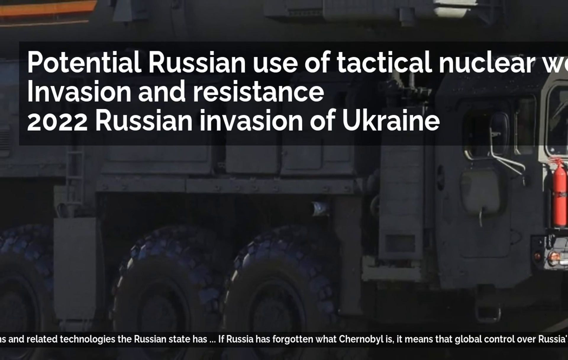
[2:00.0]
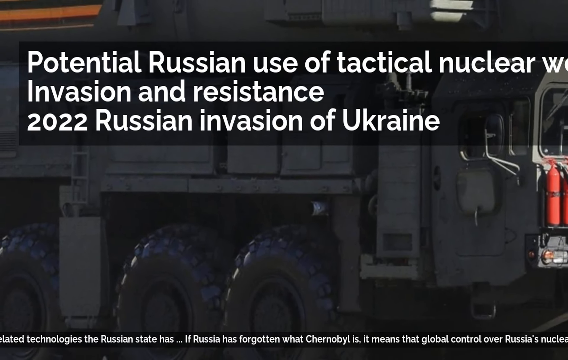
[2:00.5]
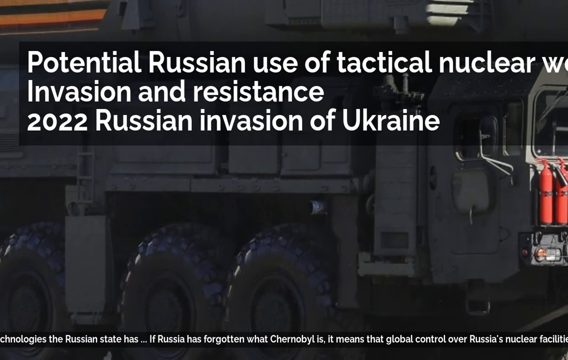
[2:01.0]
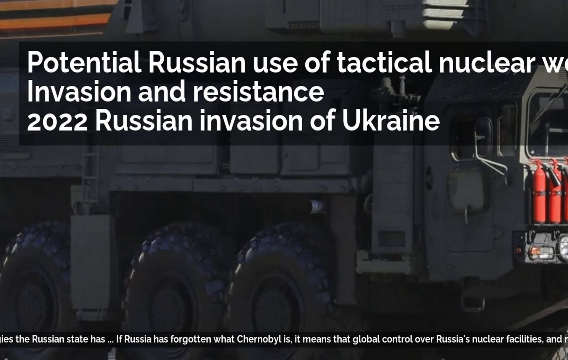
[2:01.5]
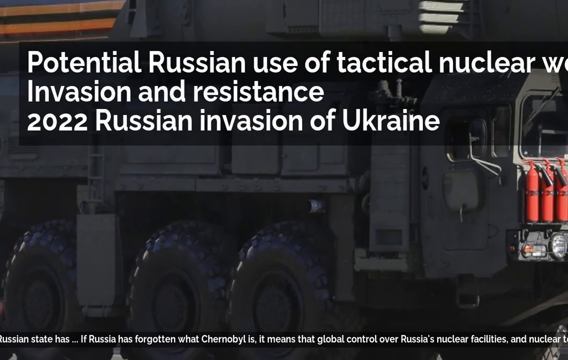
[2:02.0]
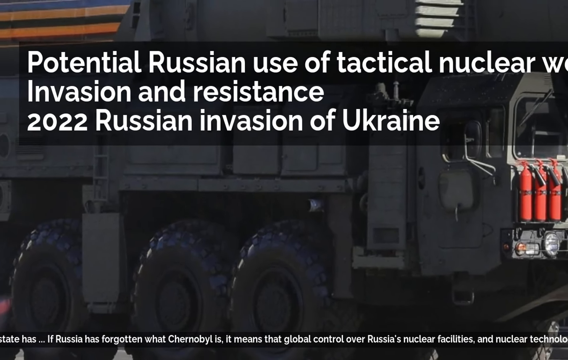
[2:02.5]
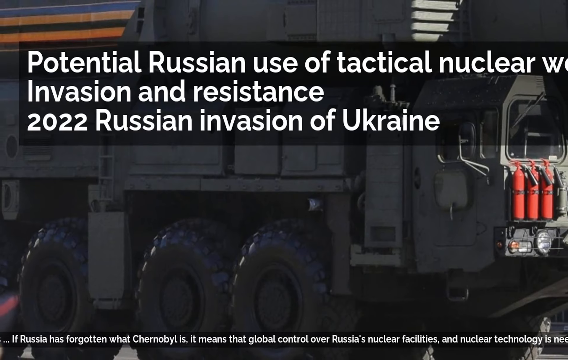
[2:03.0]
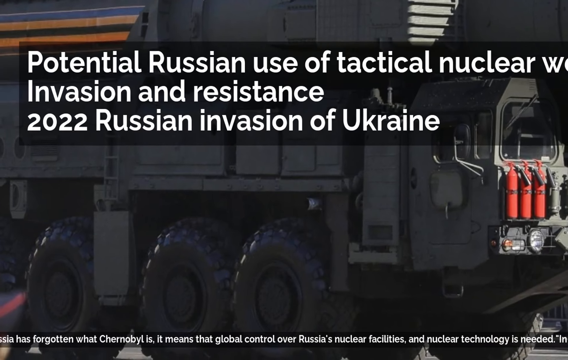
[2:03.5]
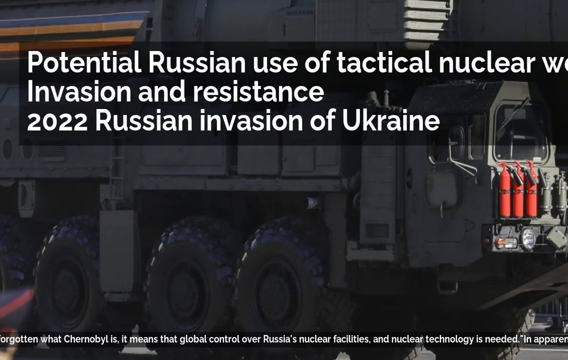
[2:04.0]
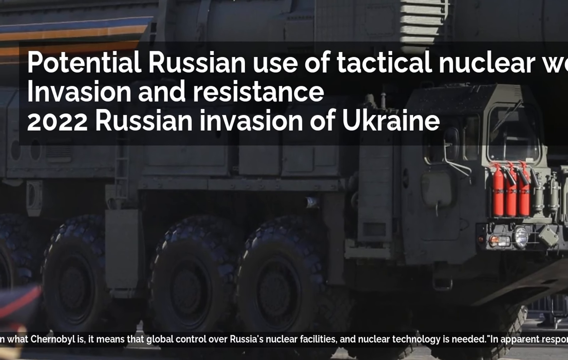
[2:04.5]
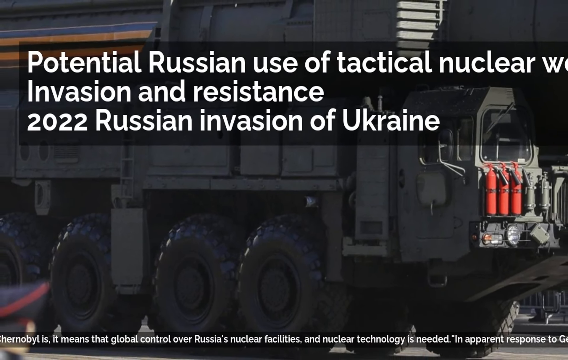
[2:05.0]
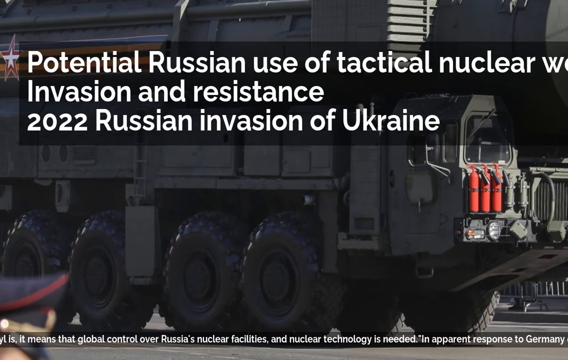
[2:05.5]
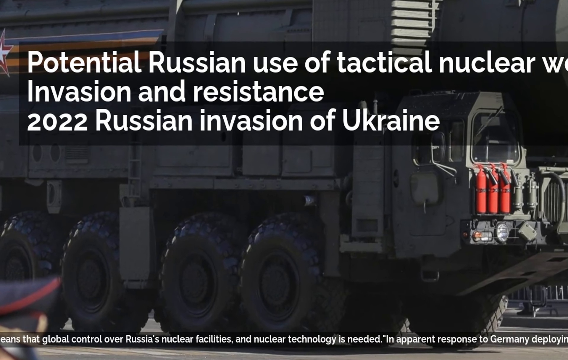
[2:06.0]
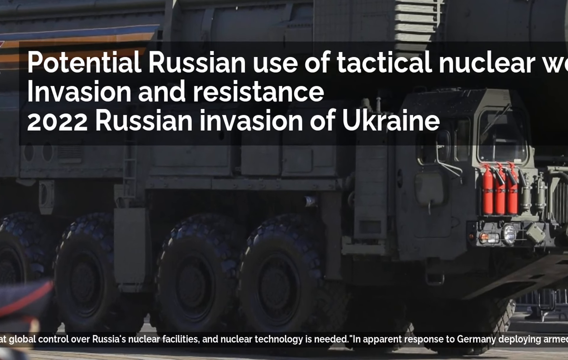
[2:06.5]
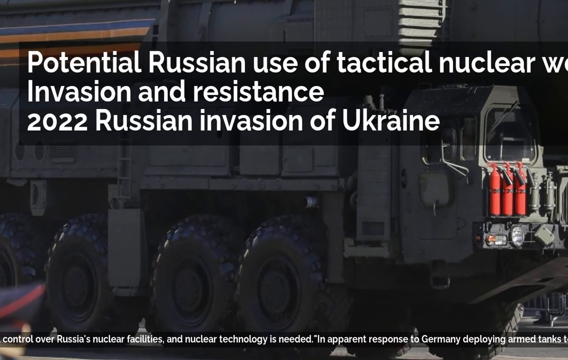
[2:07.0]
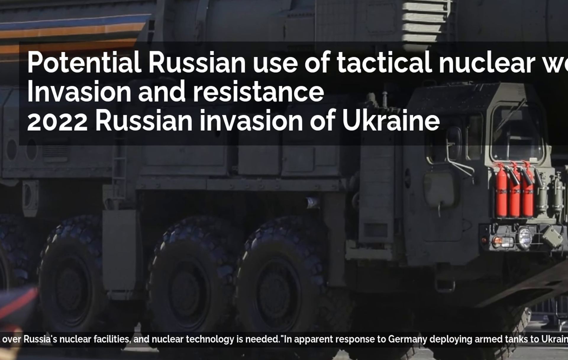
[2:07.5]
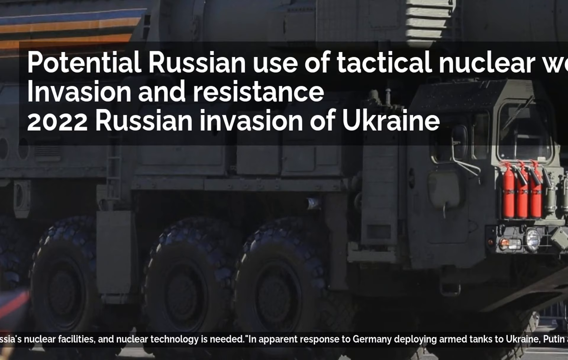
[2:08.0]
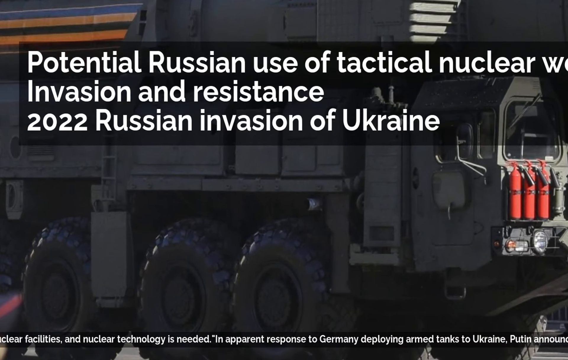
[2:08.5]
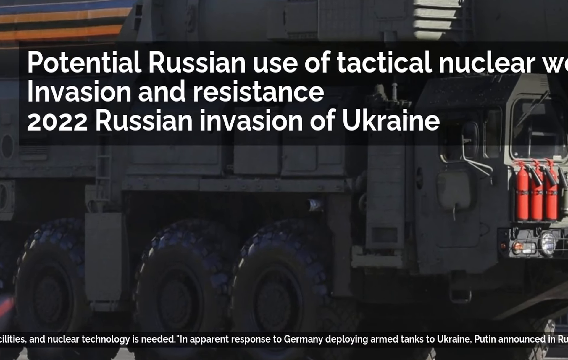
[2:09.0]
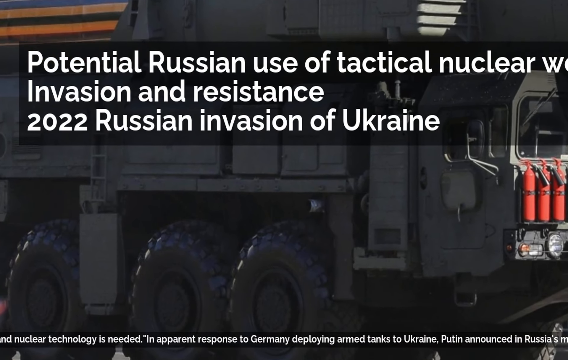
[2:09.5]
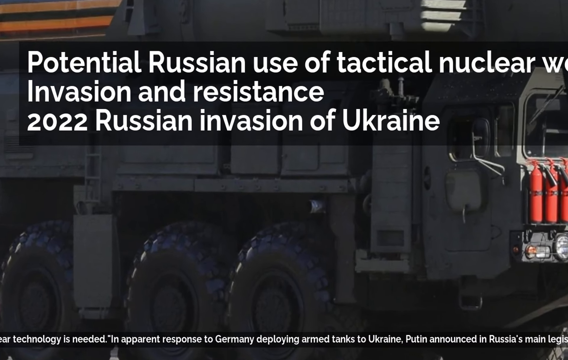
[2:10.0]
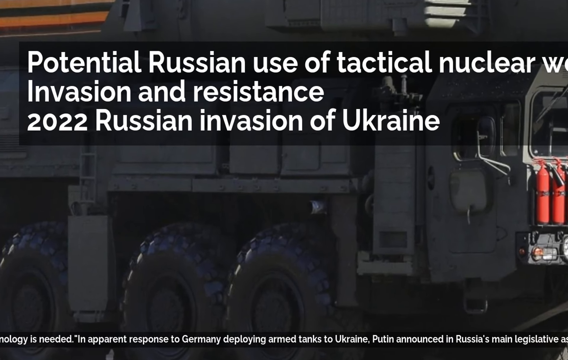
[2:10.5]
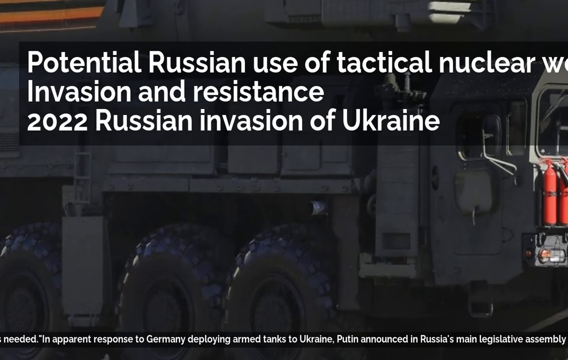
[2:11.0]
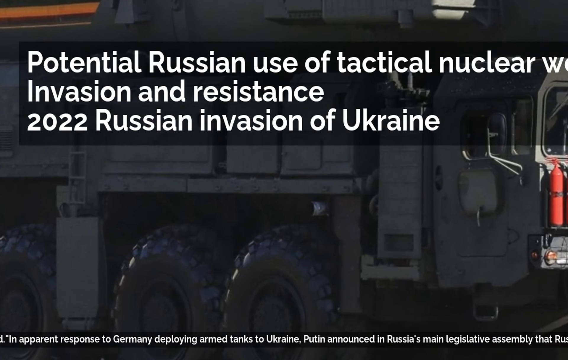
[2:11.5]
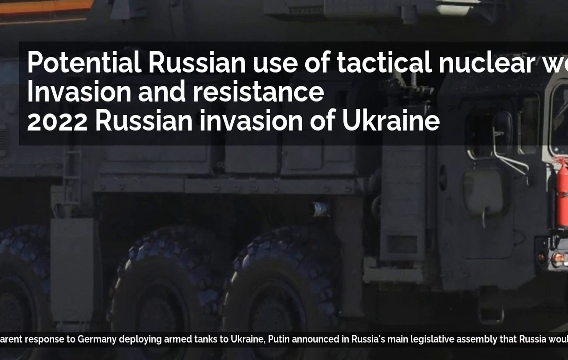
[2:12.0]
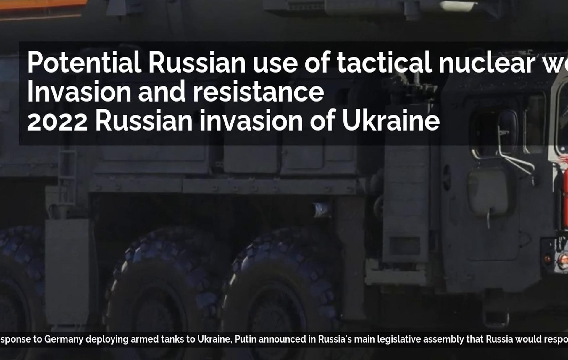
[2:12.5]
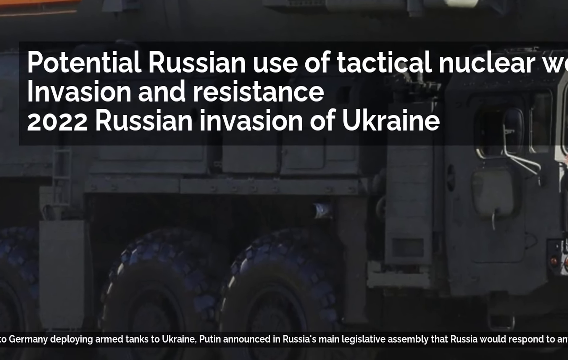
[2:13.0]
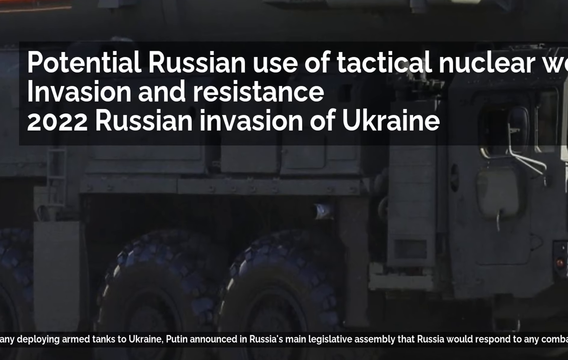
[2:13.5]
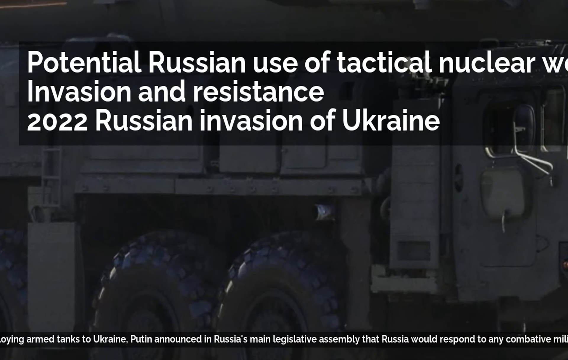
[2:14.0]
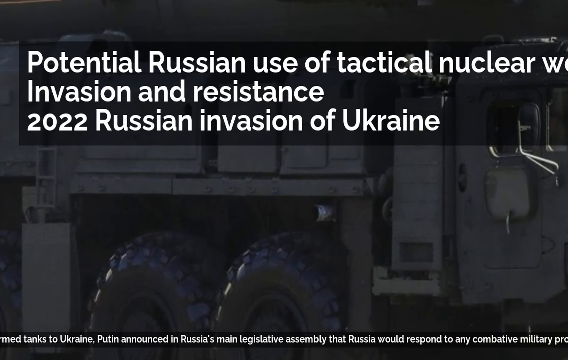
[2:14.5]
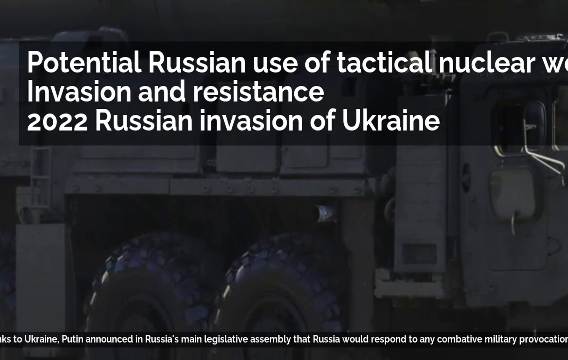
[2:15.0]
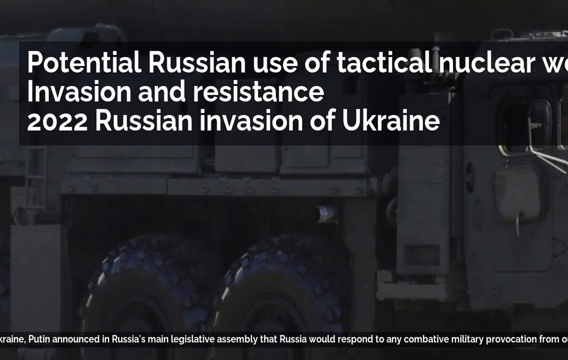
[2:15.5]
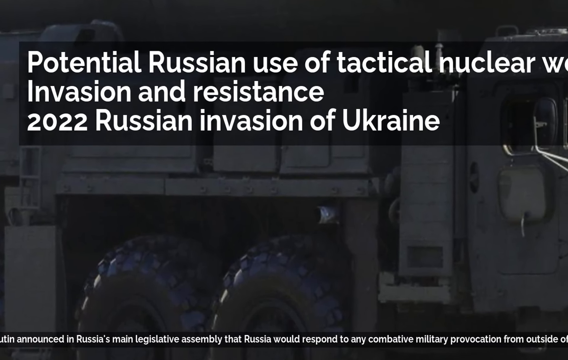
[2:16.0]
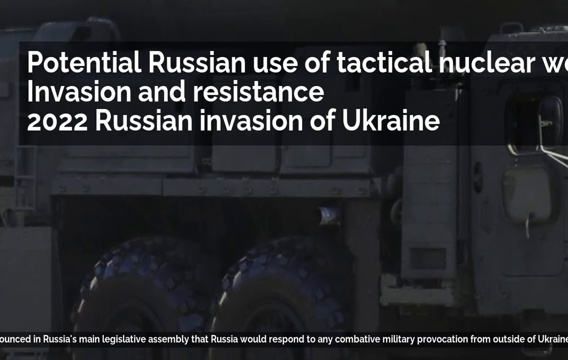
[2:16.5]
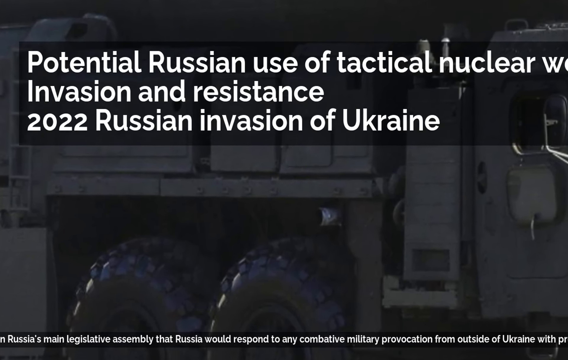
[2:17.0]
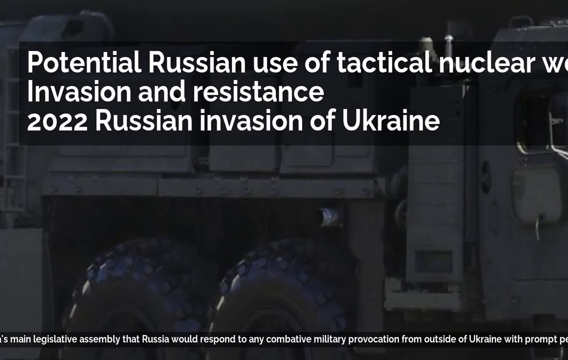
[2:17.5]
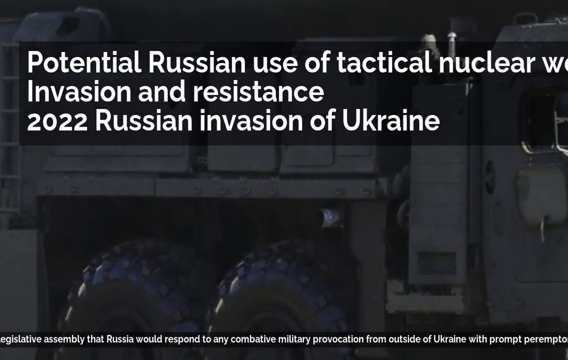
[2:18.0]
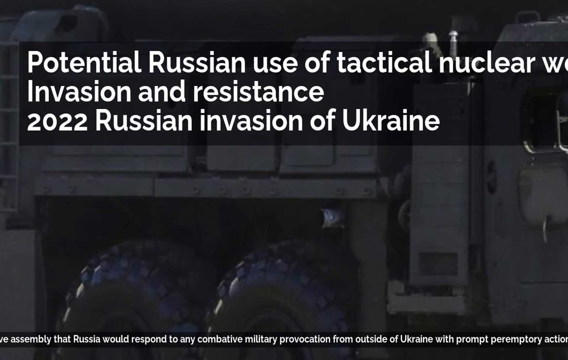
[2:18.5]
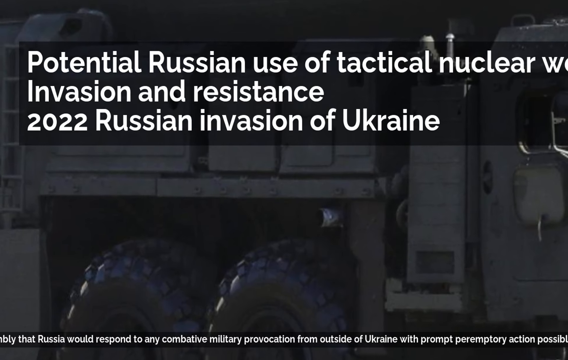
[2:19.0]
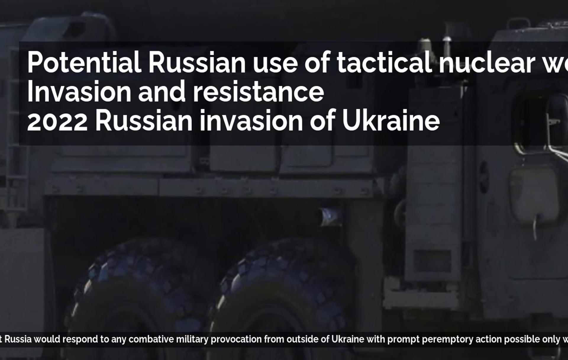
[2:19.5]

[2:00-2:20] The static image of the gray armored vehicle remains, with the camera zooming in and out on this one main picture. The only thing moving on screen is the news text ribbon at the bottom, which continues: "if Russia has forgotten what Chernobyl is, it means that global control over Russia's nuclear facilities and nuclear technology is needed. In apparent response to Germany deploying armored tanks to Ukraine, Putin announced in Russia's main legislative assembly that Russia would respond to any combative military provocation from outside of Ukraine with prompt preemptory action possible only with Russia."